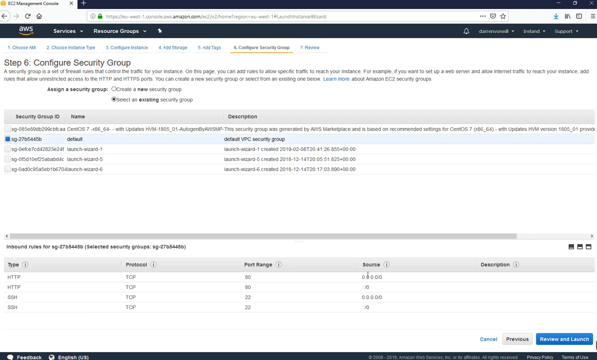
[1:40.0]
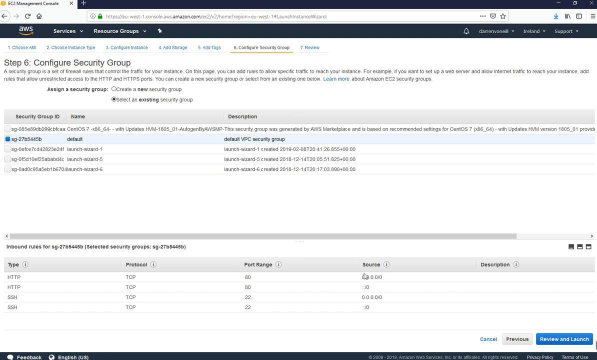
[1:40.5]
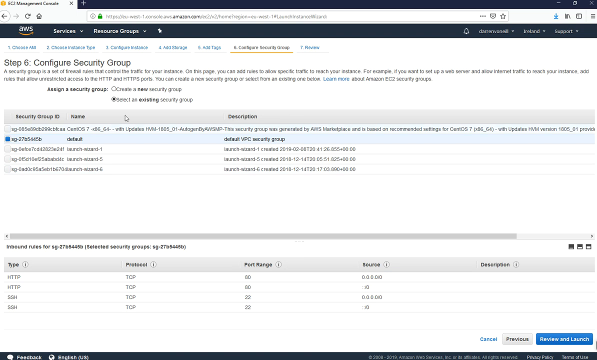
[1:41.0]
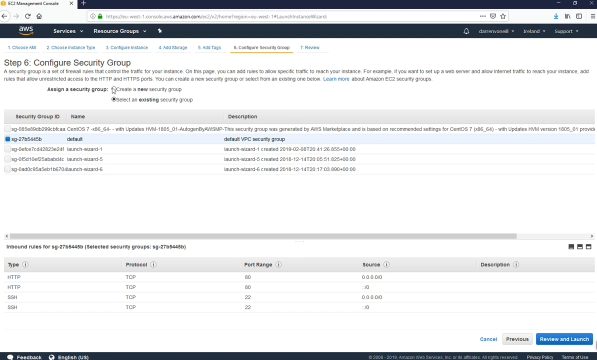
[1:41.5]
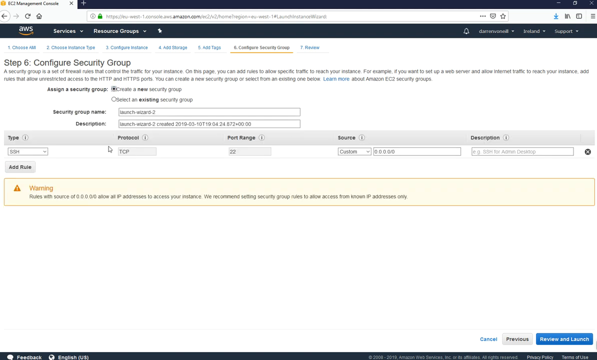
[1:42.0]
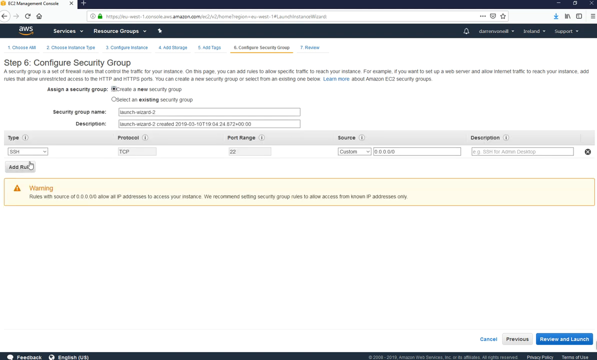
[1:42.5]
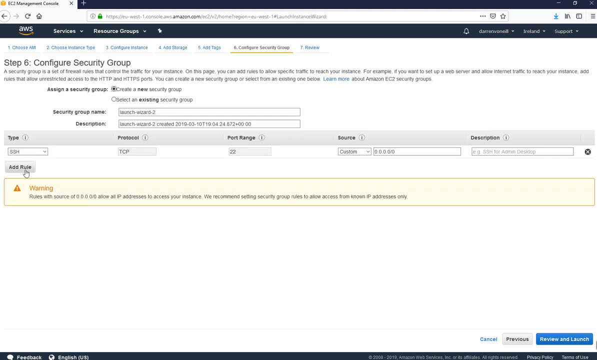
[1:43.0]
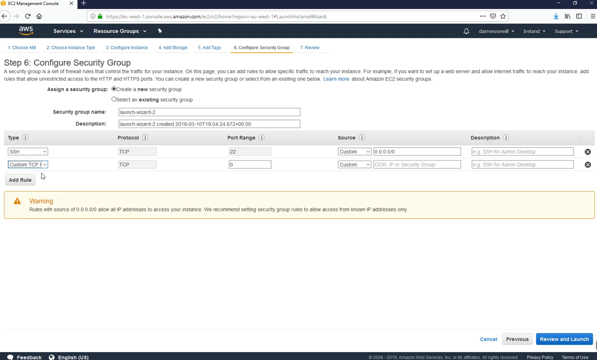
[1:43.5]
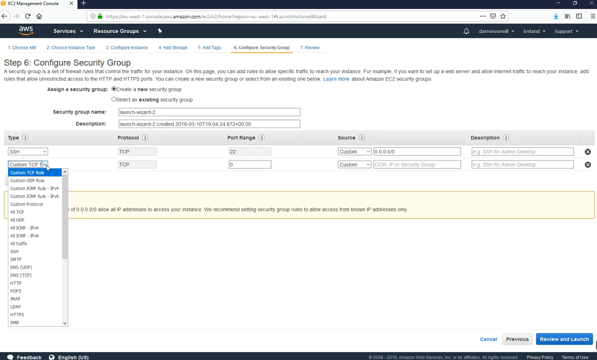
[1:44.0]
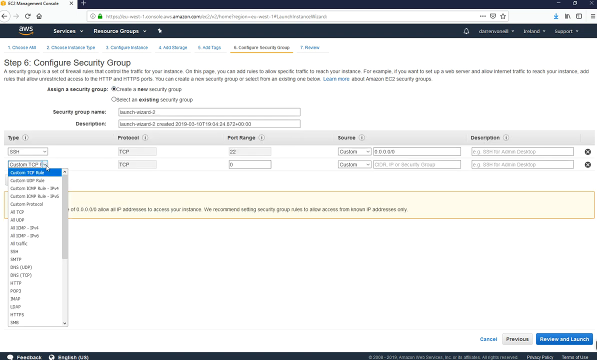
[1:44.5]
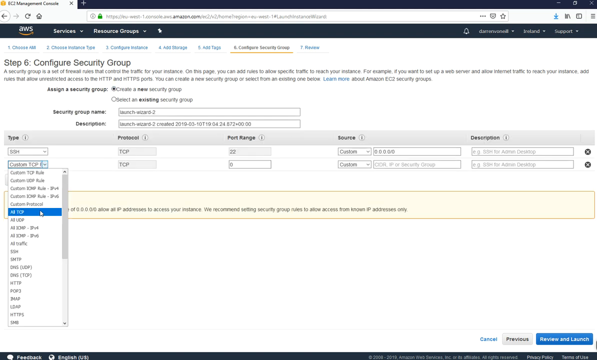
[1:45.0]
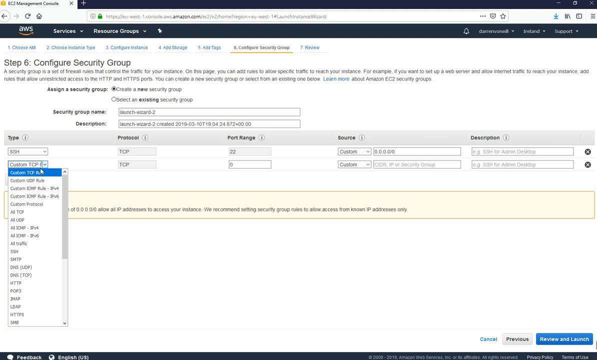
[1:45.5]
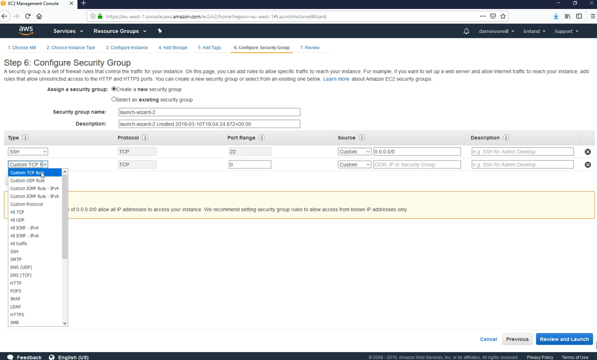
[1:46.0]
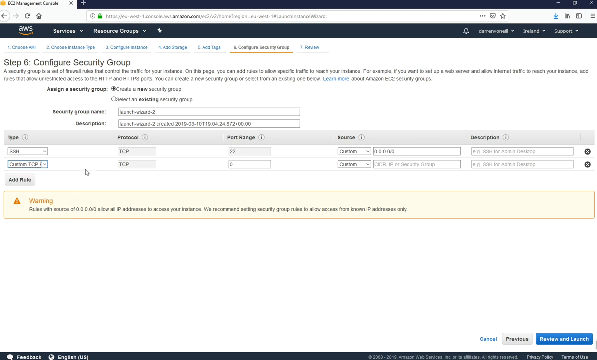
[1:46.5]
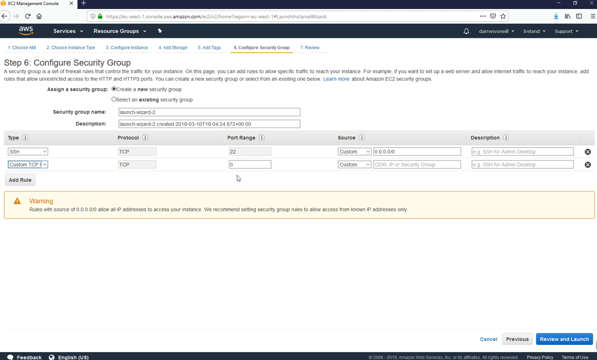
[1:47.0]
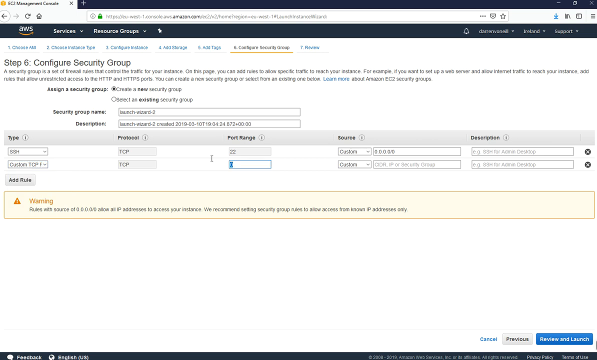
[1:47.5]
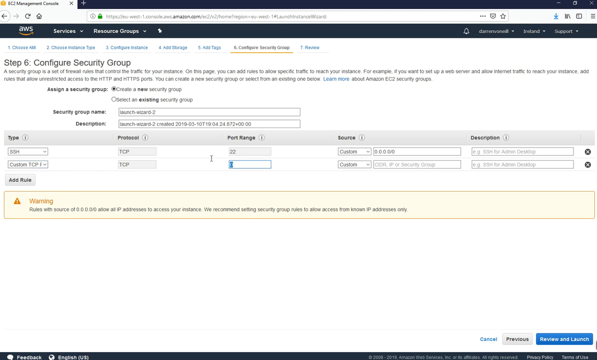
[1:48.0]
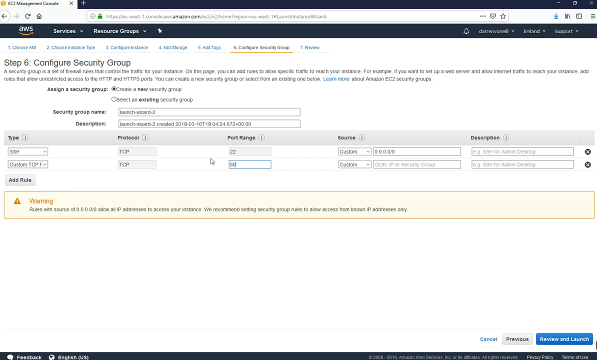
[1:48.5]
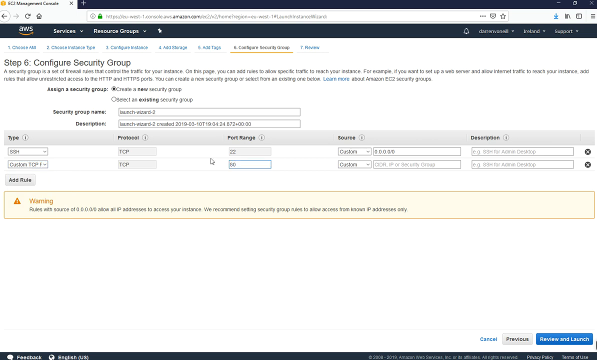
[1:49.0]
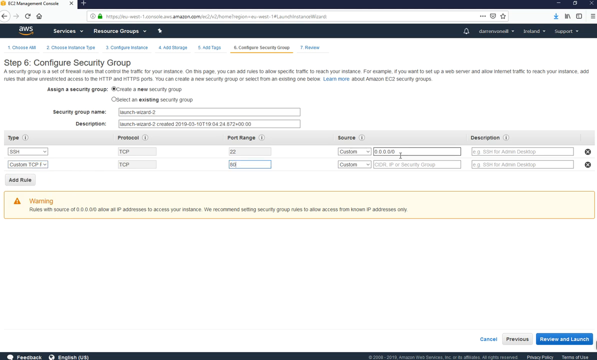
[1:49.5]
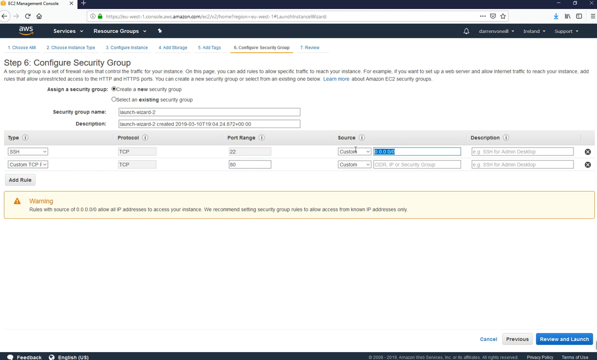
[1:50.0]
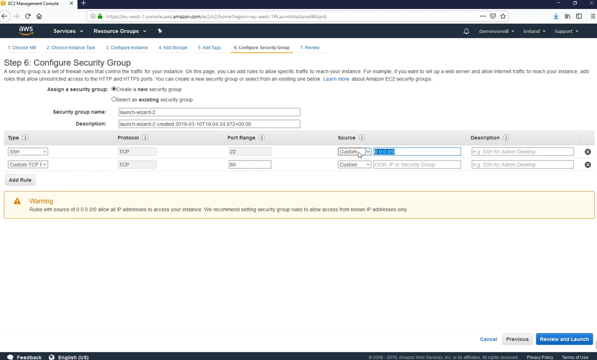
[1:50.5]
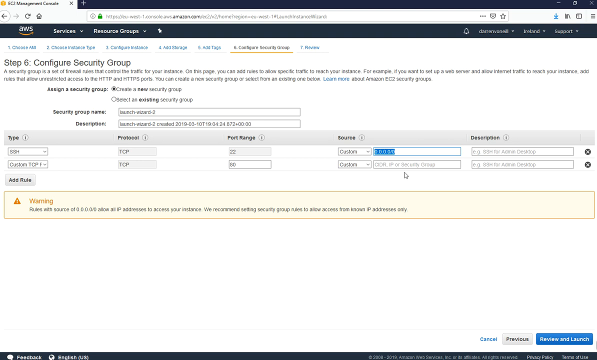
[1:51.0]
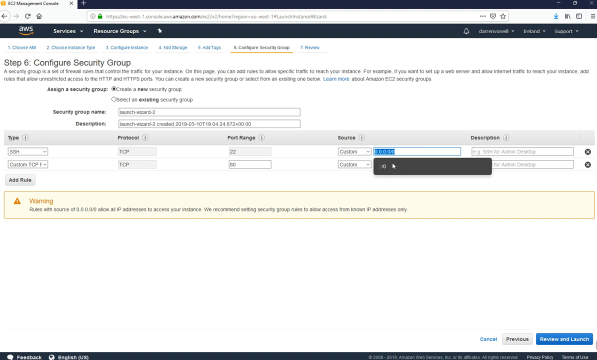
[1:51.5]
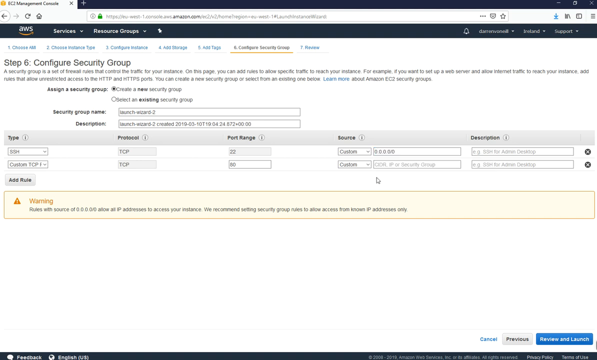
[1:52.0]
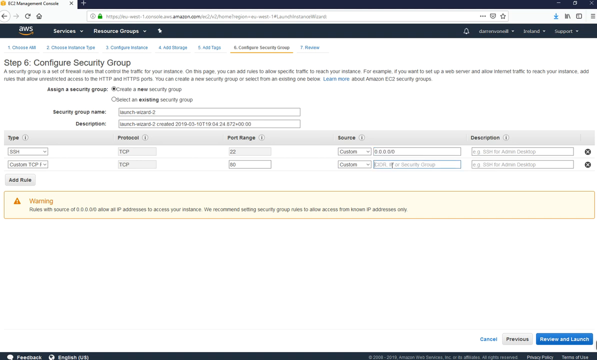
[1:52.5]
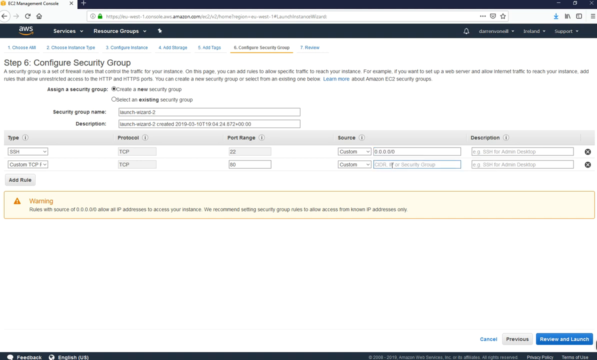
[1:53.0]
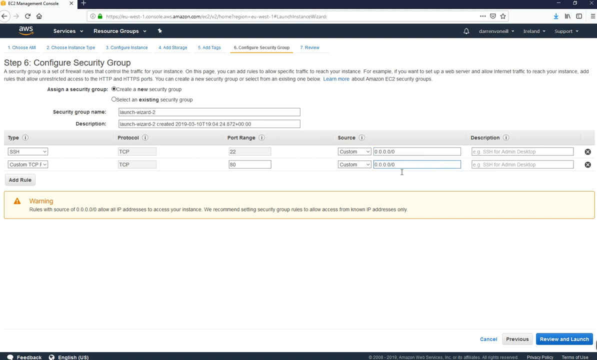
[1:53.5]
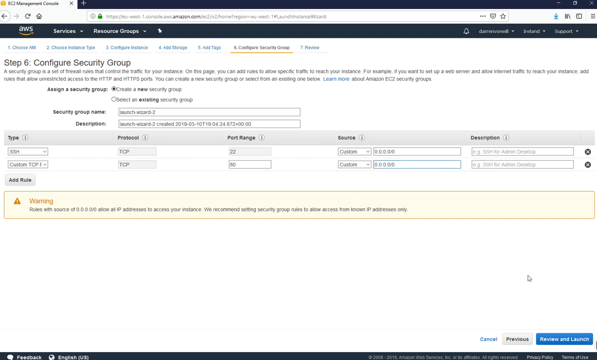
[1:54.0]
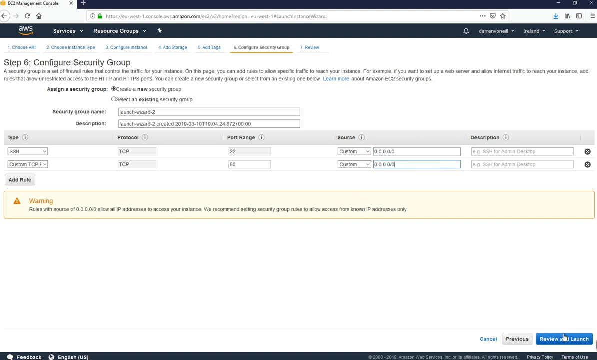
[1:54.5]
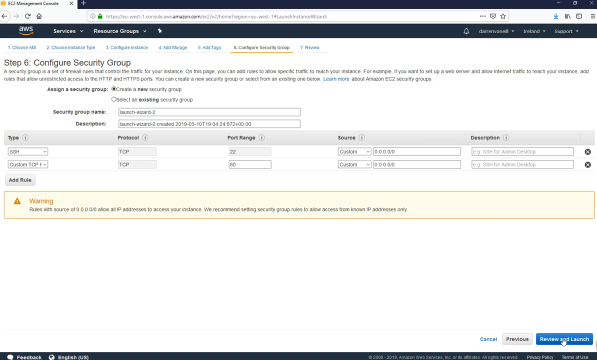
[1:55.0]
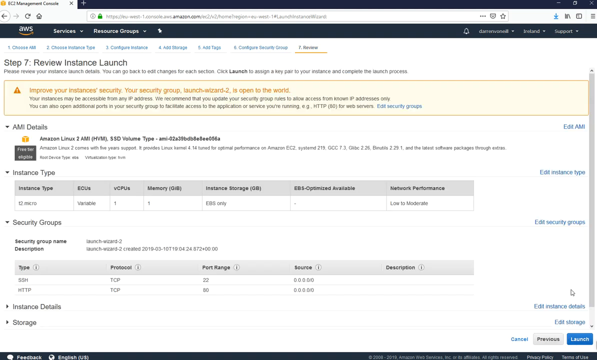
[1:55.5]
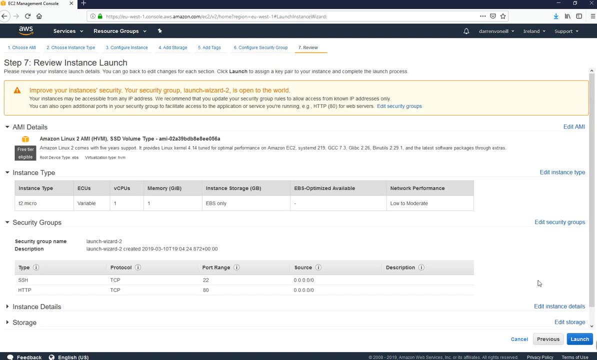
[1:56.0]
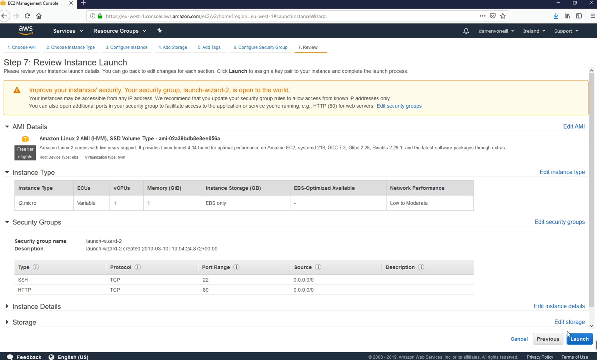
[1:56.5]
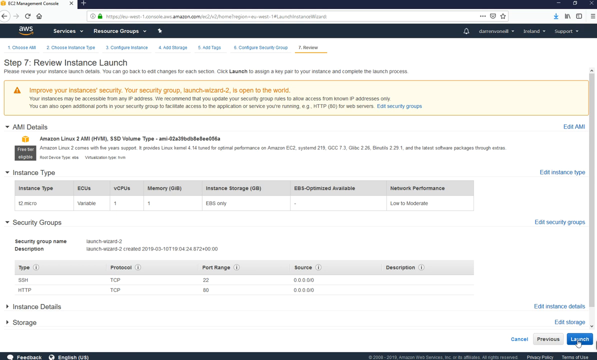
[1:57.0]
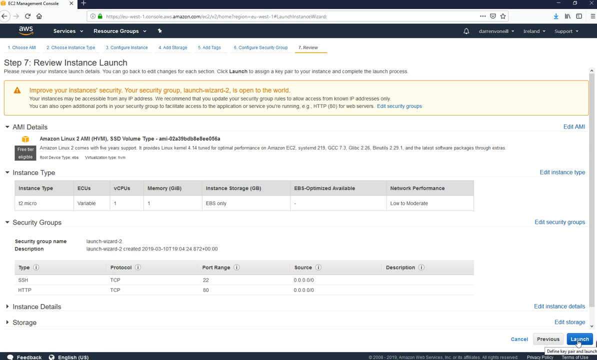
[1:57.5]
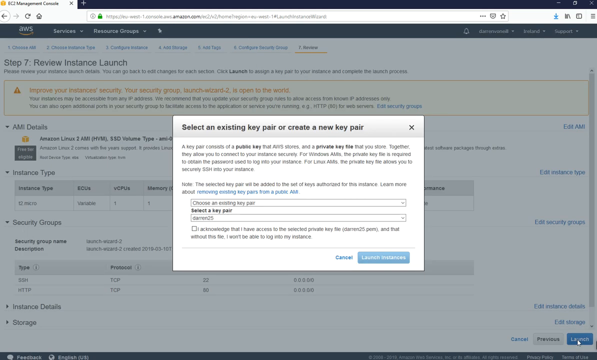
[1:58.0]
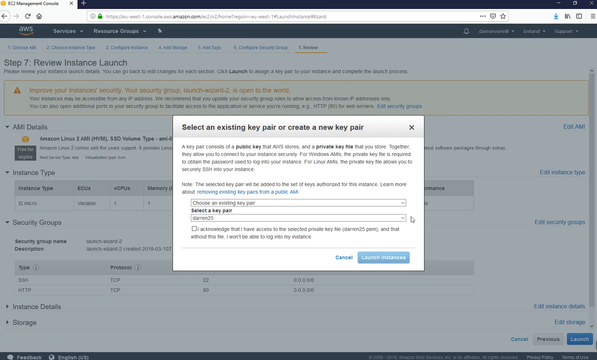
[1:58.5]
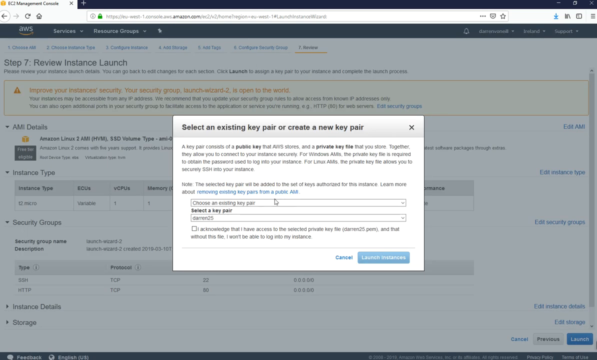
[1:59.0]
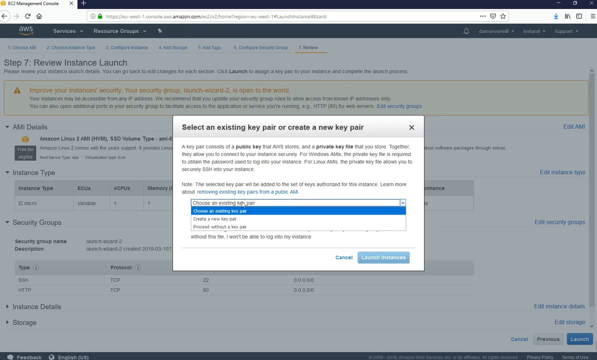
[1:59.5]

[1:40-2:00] The AWS services web page is now on step six, configure security group. The cursor moves up and clicks Assign a Security Group, Create a new security group. Below that appear two boxes with text in them, a toolbar, and boxes for entries. The cursor clicks Add Rule, opening a drop-down box whose selections highlight as the cursor moves over them. Custom is clicked, and something is entered in the Port Range box. More entries are added, and then the next step, number 7, Review instance launch, is clicked. The cursor moves to the bottom right edge of the page, where there are buttons for previous, cancel and launch, and launch is chosen. A pop-up box opens over the screen, and at the top it reads "select an existing key pair or create a new key pair".